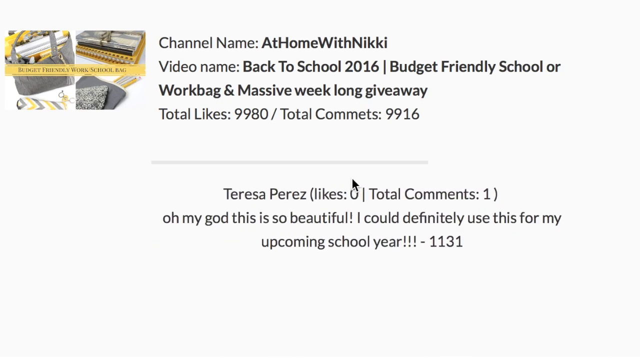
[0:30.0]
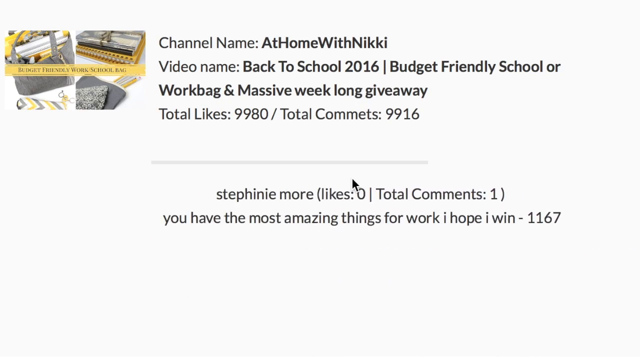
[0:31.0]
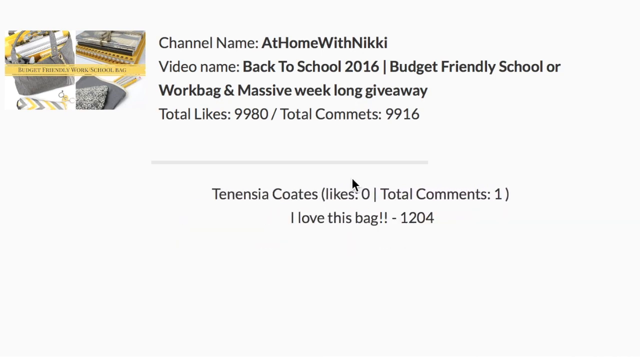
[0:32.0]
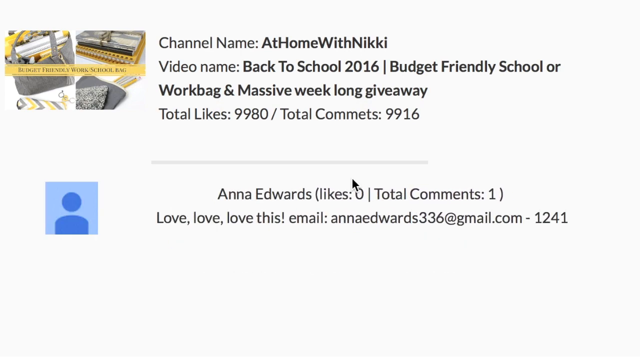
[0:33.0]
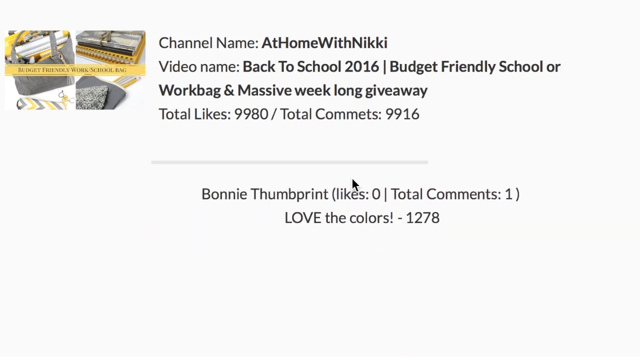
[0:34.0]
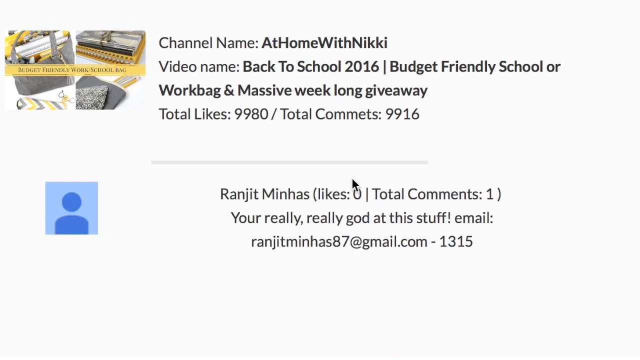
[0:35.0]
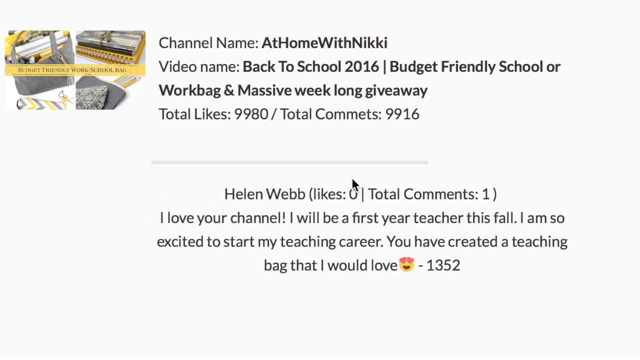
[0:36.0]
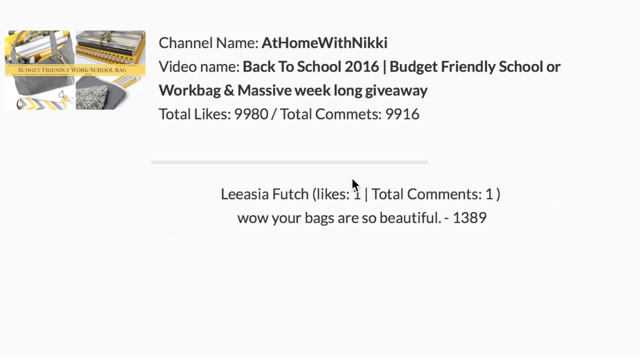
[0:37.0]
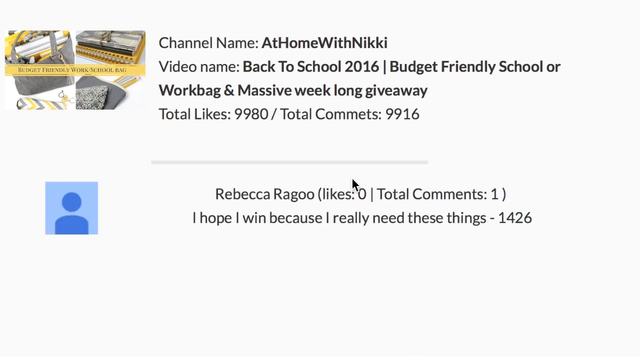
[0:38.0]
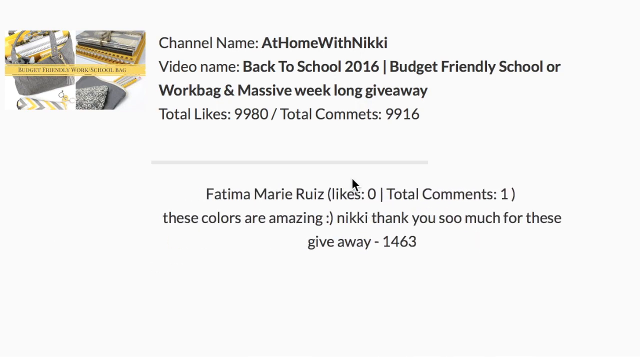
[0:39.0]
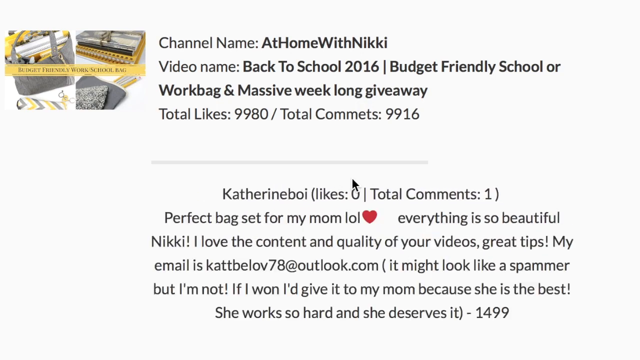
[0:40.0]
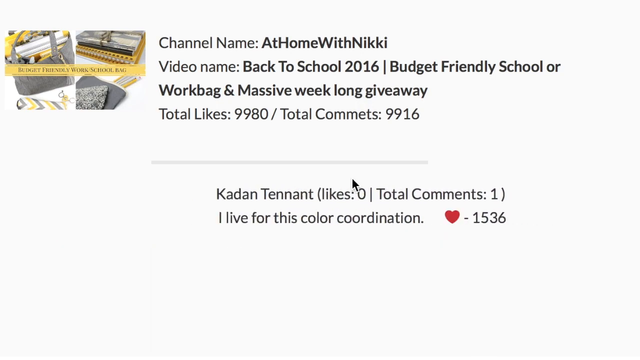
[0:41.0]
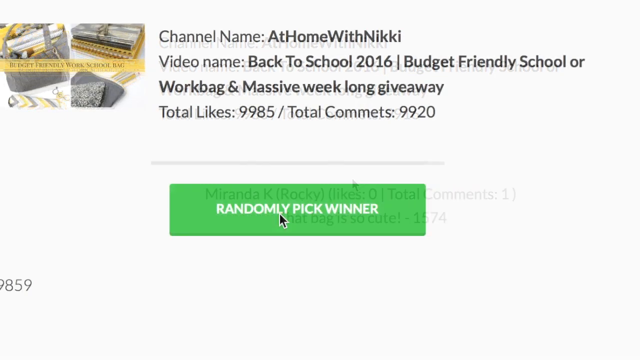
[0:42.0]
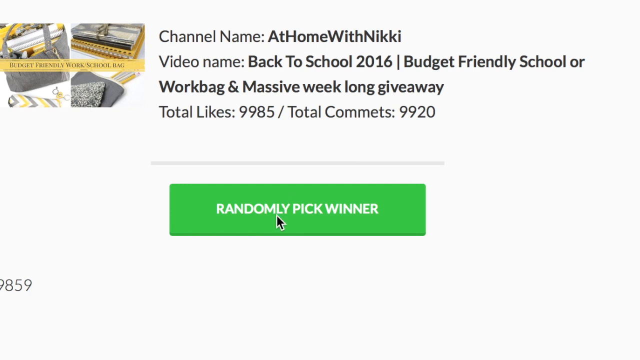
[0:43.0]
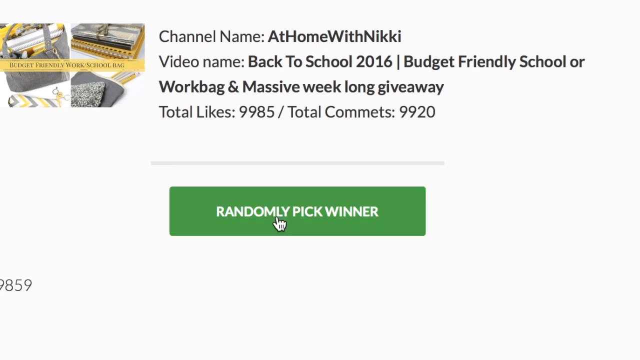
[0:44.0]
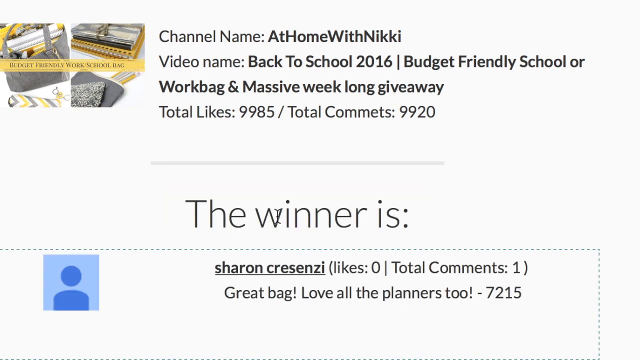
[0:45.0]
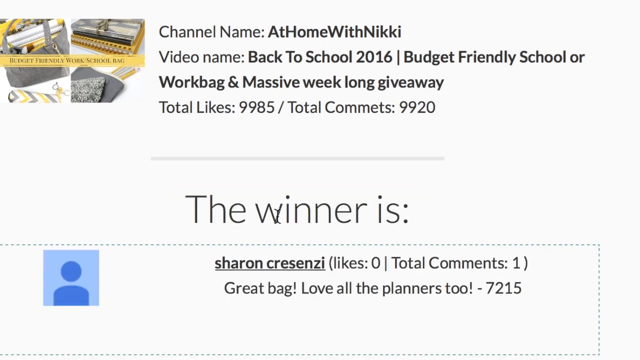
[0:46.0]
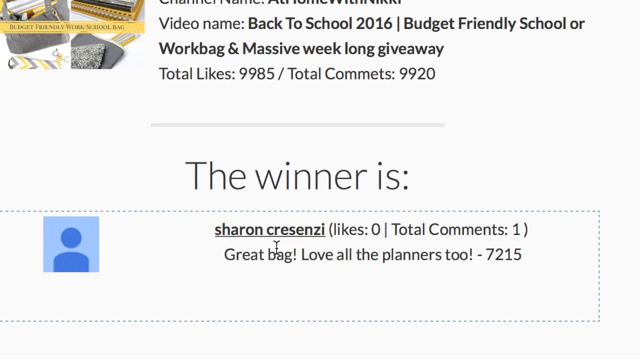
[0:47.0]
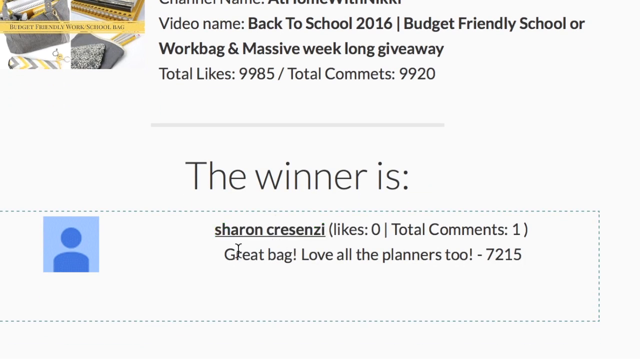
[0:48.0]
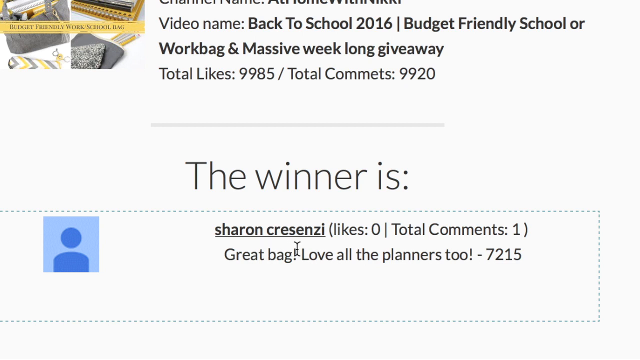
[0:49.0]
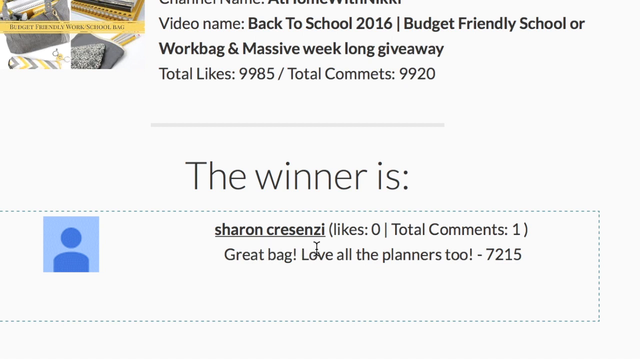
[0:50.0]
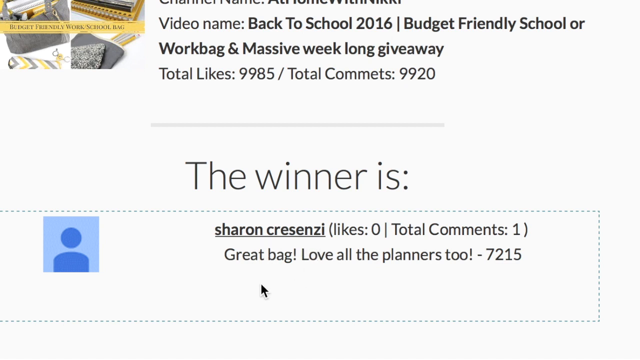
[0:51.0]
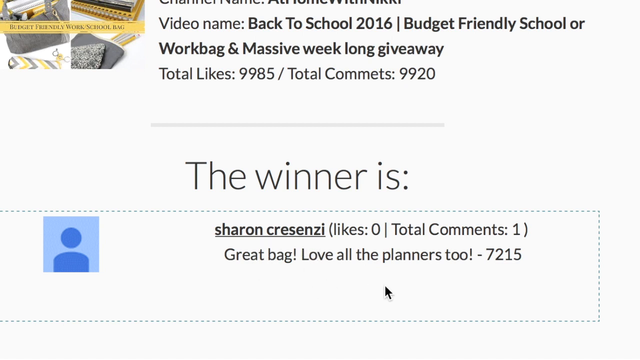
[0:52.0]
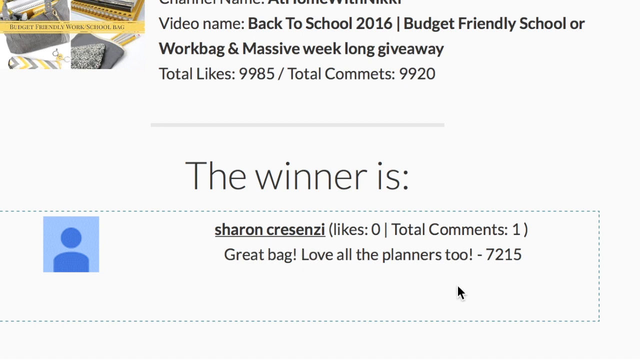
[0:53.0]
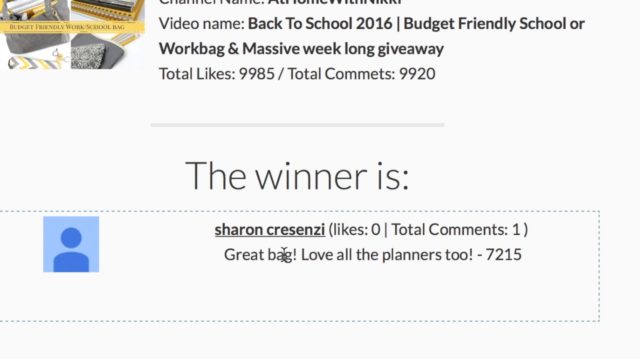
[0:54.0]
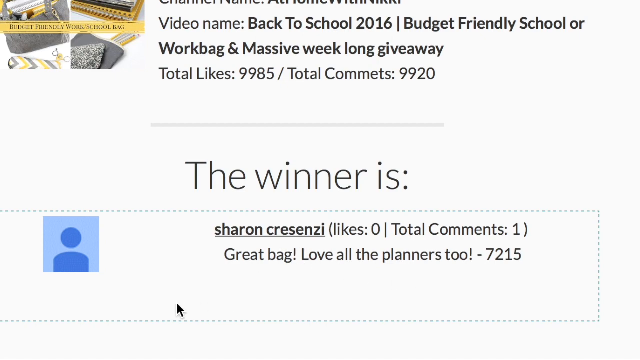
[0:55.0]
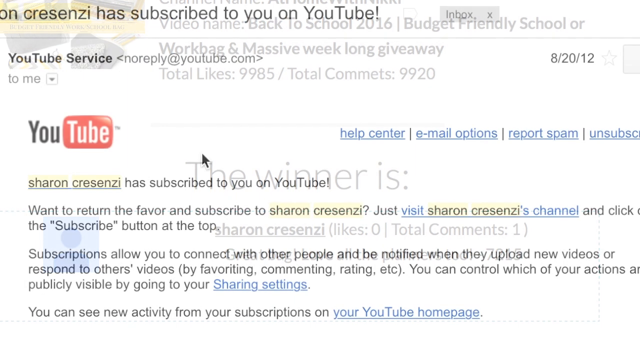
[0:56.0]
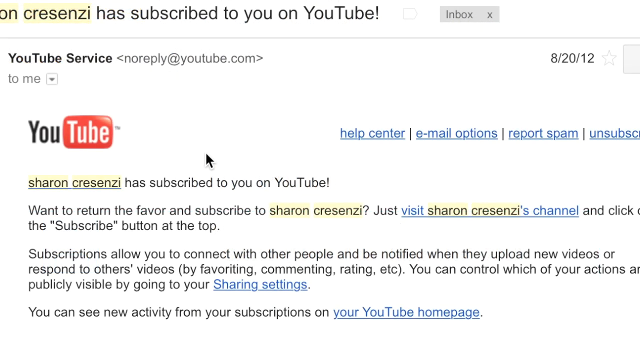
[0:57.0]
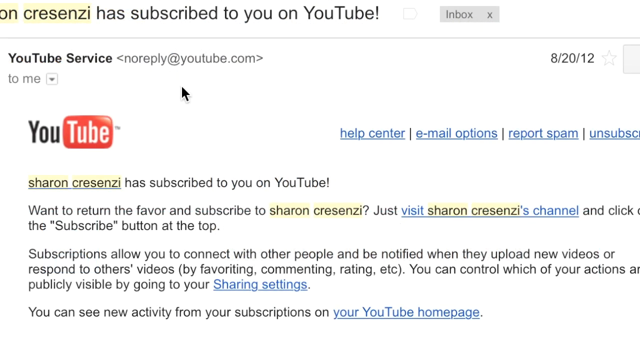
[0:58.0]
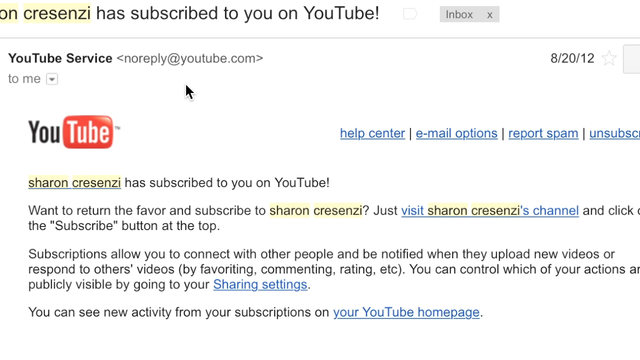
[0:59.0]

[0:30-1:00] The social media feed continues on a white background, with the channel name "at home with Nicky" and the video name beginning "back to school 2016". Comments keep appearing rapidly. Melissa Goodger says "god bless you gifting this bag to a subscriber is very kind of you every item is beautiful". Yasmin Meyers says "you can organize anything". Caitlina Christina writes "this is the best giveaway I want it so bad". Raleigh Queen also comments. Anna Santiago writes "I absolutely love the colors as well as the bag is the perfect size I would love to have the opportunity to win this bag and accessories your videos are fabulous". Chocomelo writes "I love your style and you were just gorgeous the giveaways you make are awesome and I would be the happiest person". Noor Ali writes "this is really really beautiful". Many more replies follow. Then a screen appears with a little green button that says "randomly pick winner", and the winner is drawn: it looks like Sharon Krasiny, whose comment reads "great bag love all the planners too", entry 72-15. A shot of YouTube follows.